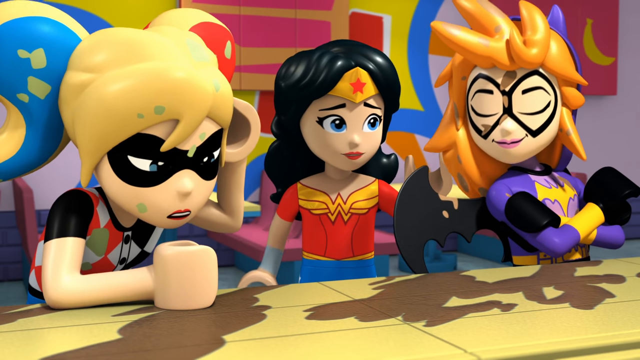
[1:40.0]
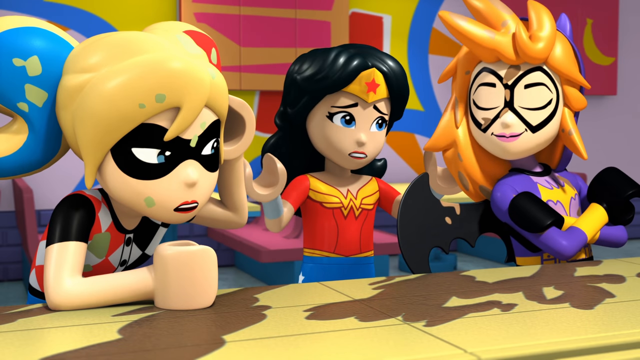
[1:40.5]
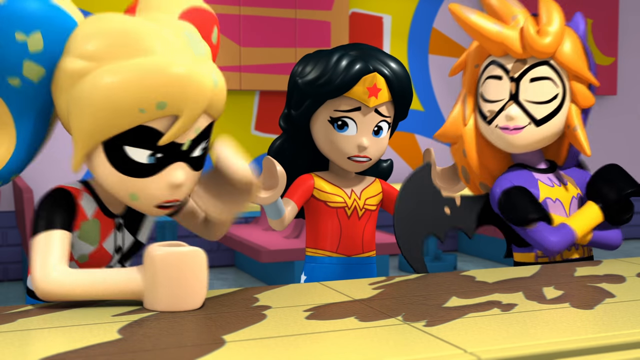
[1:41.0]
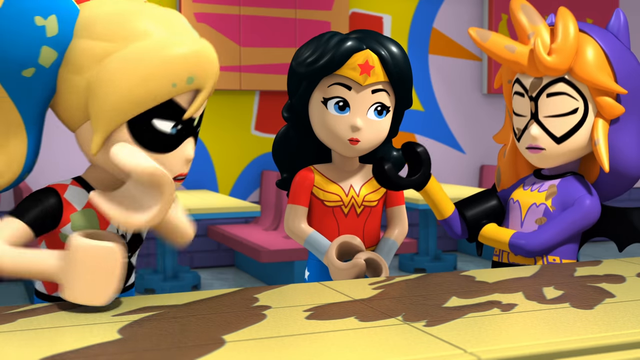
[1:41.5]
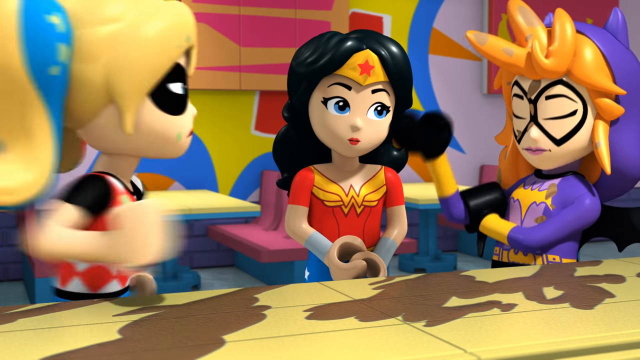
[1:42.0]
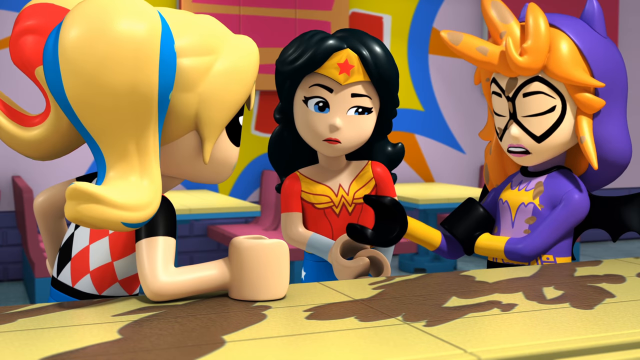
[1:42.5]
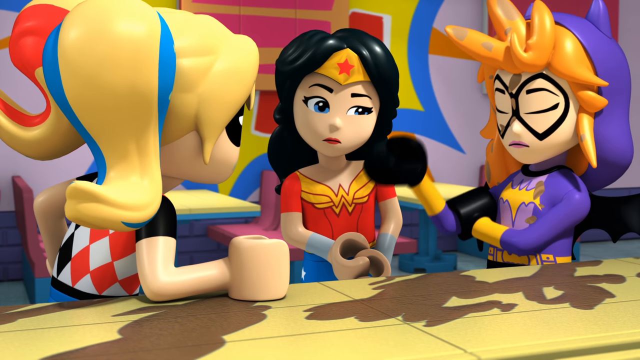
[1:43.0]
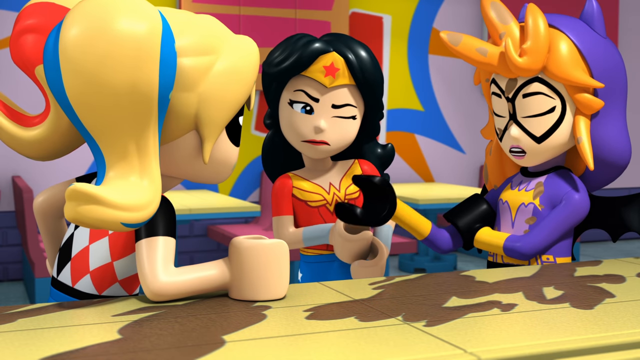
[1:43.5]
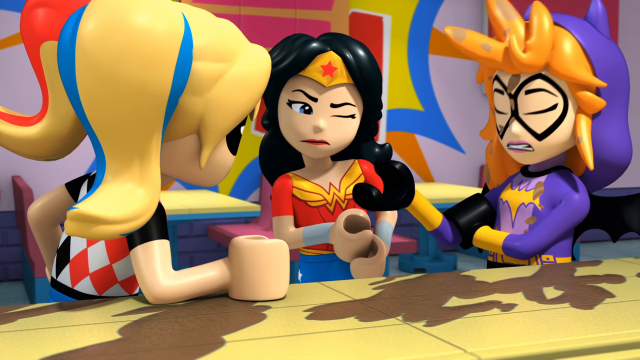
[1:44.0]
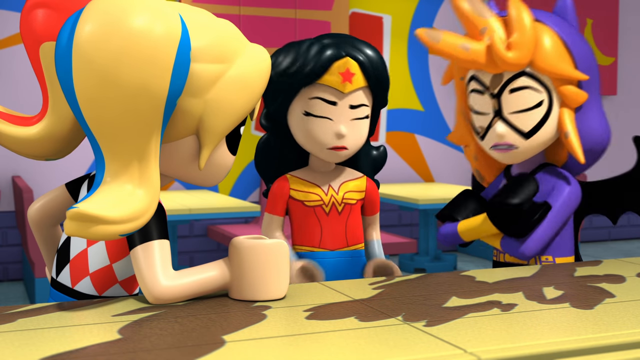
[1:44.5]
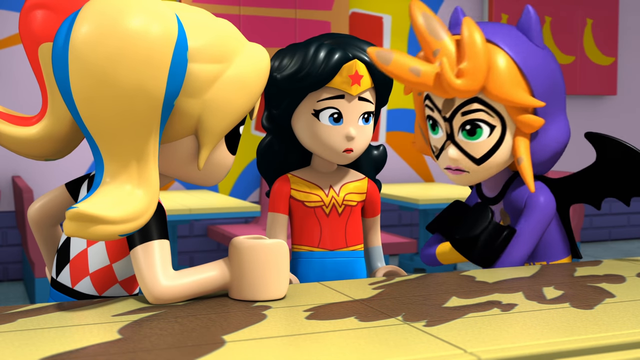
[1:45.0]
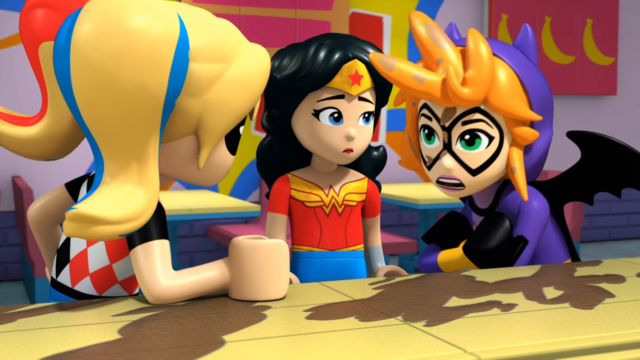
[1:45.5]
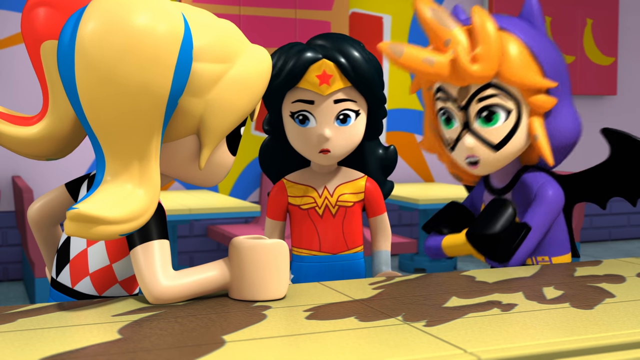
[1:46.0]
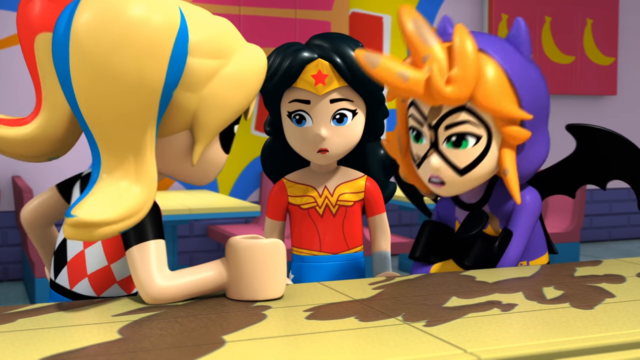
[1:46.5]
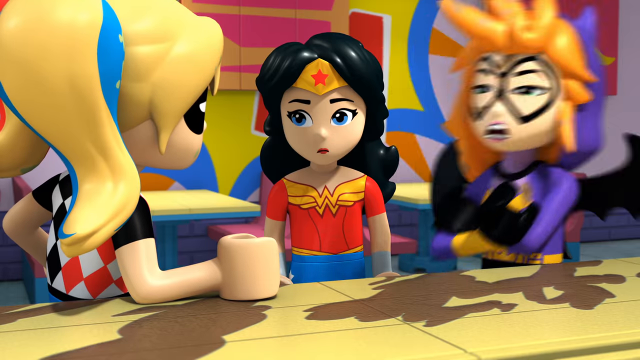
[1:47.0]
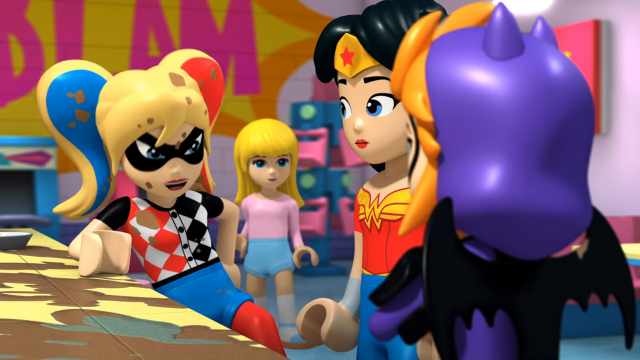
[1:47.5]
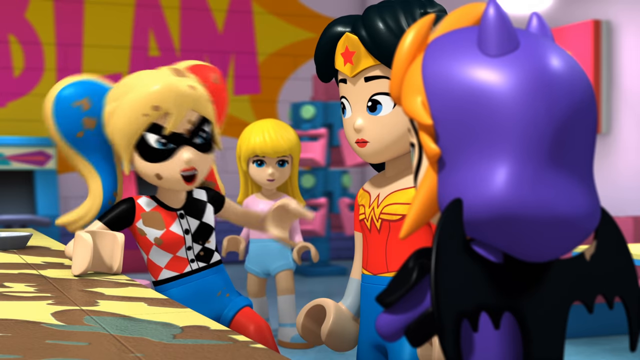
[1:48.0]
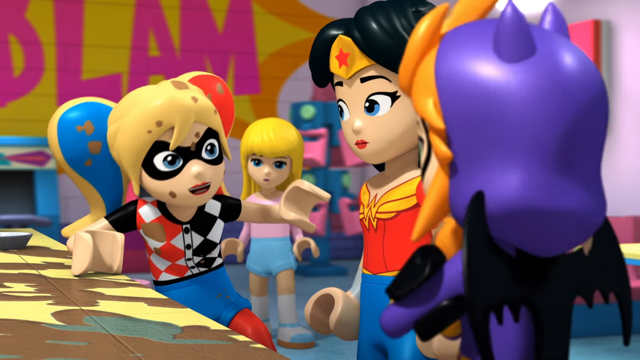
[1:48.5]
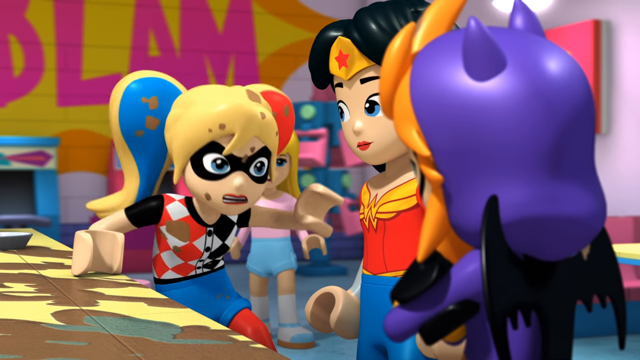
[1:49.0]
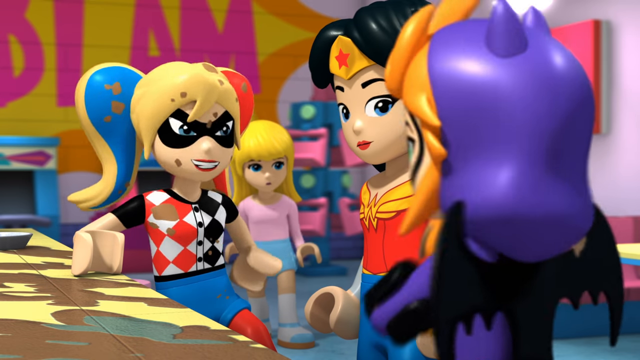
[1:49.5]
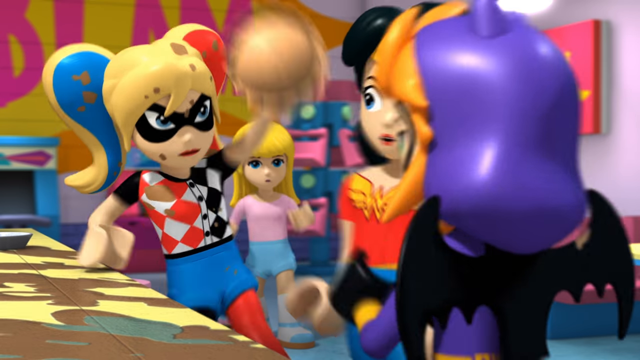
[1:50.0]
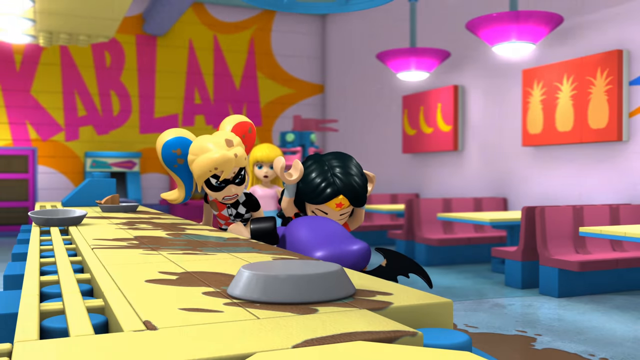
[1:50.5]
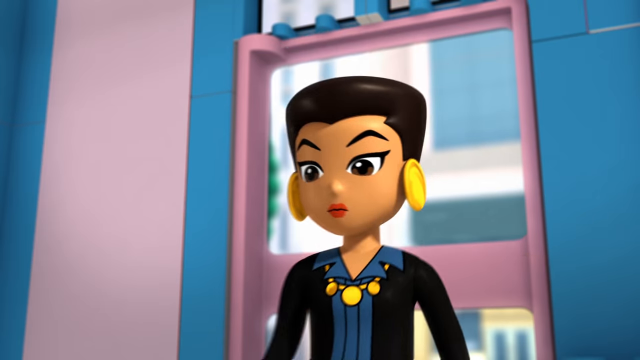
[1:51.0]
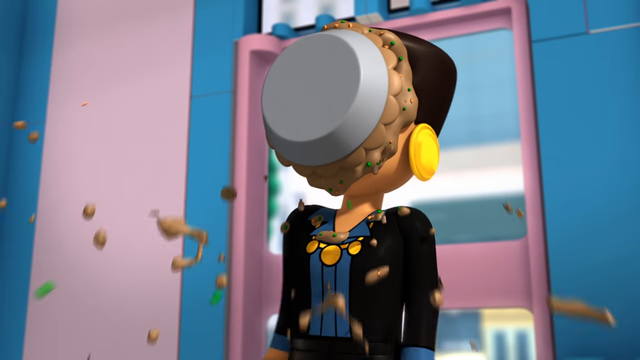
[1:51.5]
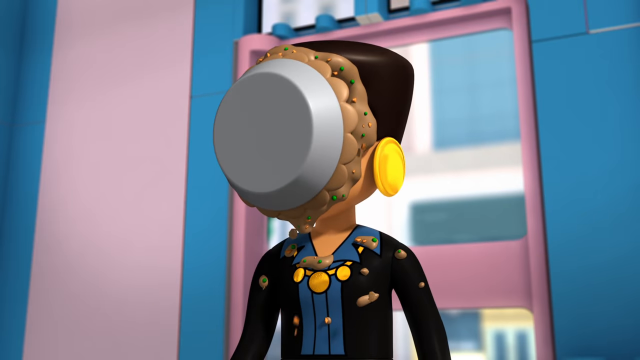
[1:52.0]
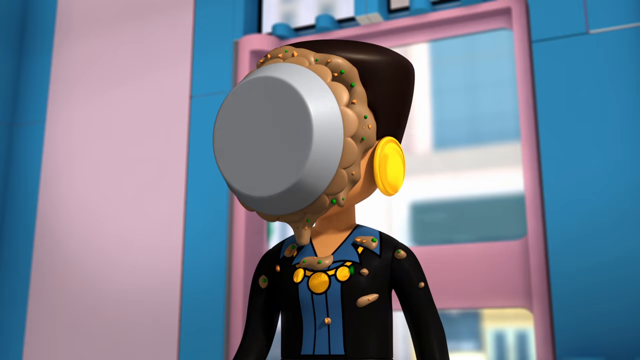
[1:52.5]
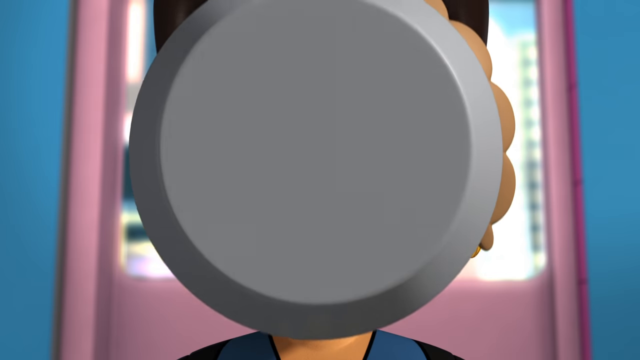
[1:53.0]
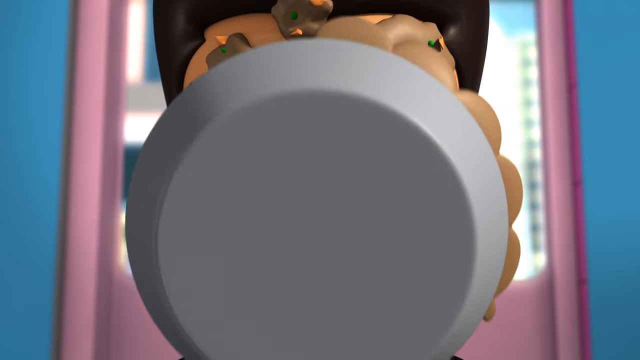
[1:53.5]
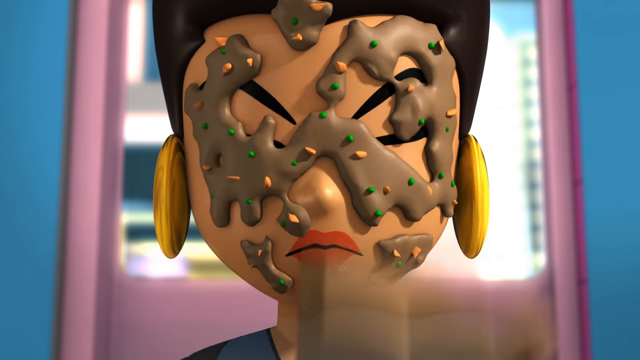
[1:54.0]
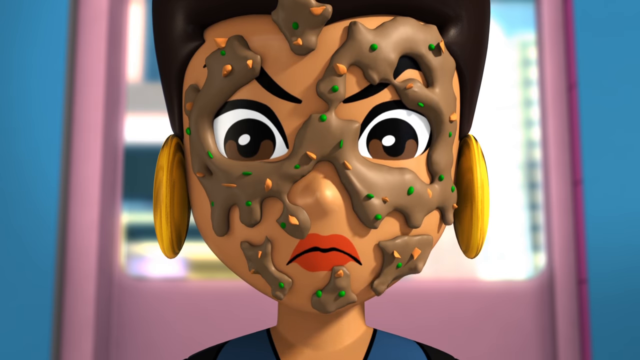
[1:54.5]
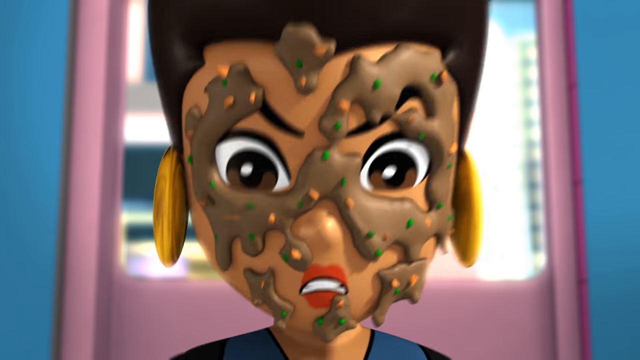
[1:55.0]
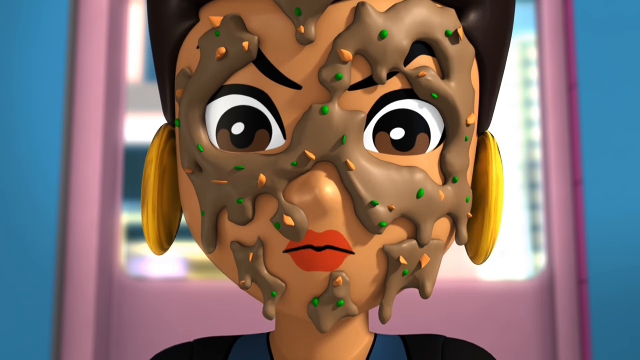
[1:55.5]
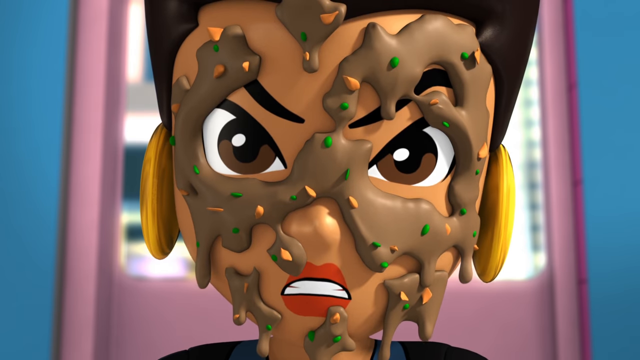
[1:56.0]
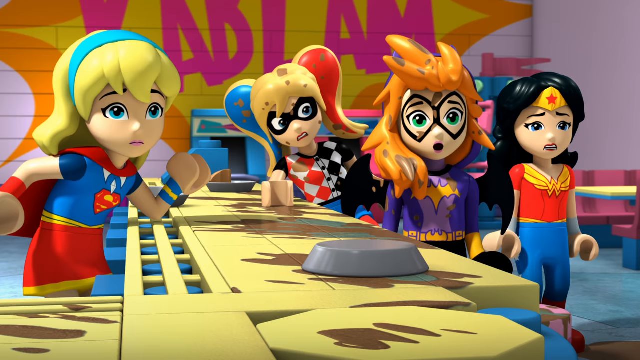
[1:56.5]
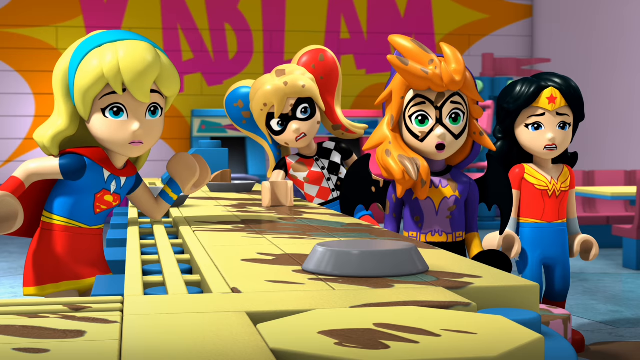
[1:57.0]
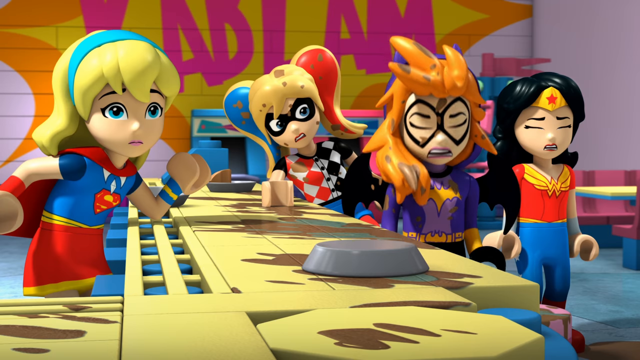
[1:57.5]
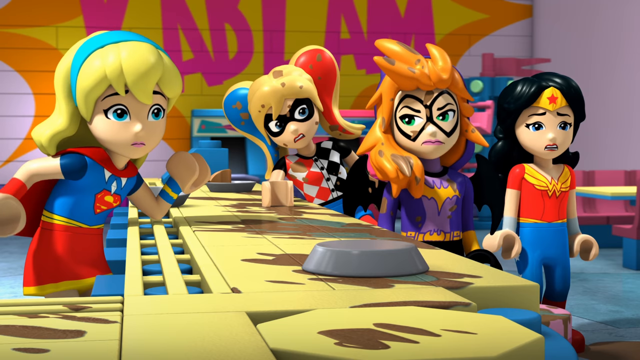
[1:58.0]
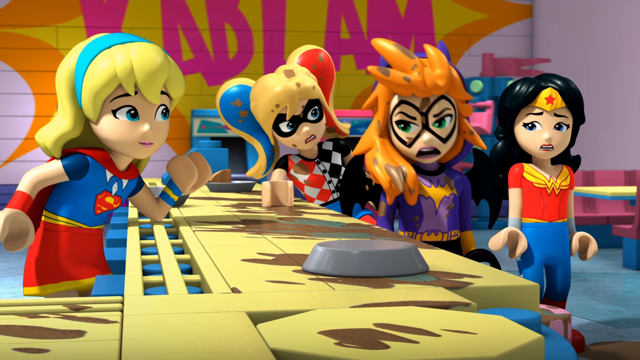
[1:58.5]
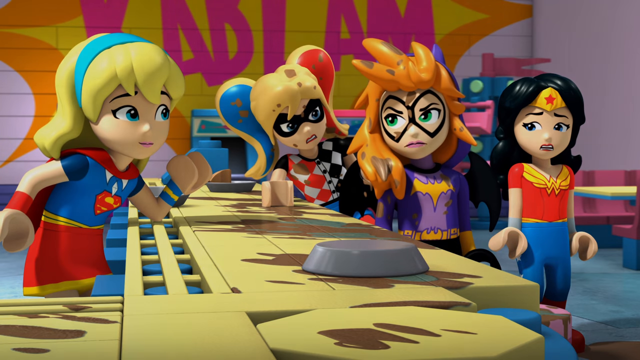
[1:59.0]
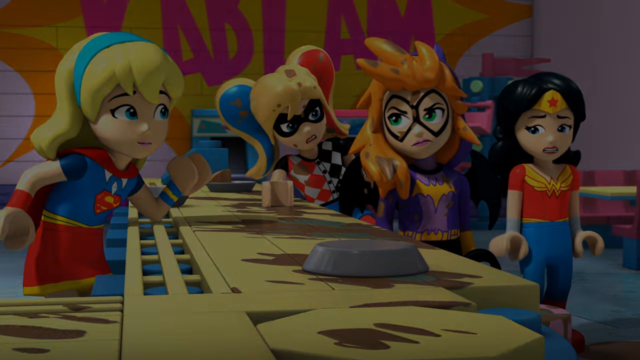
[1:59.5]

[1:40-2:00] Harley Quinn is on the left side of the screen, her blonde ponytail on the left with pie in it, including what looks like green pie; her hair is blonde and red. She has one hand up, her right hand touching the side of her head, and the other hand on the table. Wonder Woman is between them, looking toward the right side of the screen at Batgirl, whose hair sticks up in all directions, her bangs spiked up, and whose arms are crossed. Batgirl possibly won. Batgirl talks angrily to Harley Quinn, and Harley Quinn, upset, throws a pie. Batgirl ducks, and someone walking in gets the pie in the face, then becomes angry and yells.